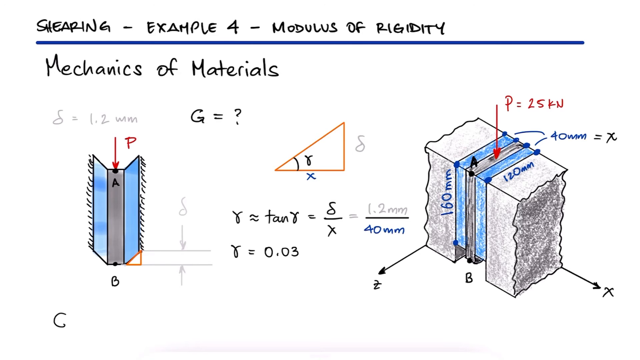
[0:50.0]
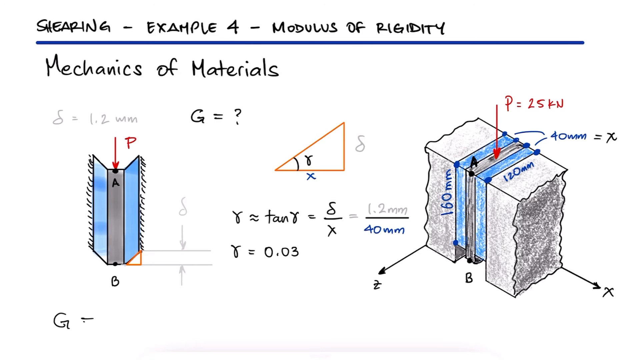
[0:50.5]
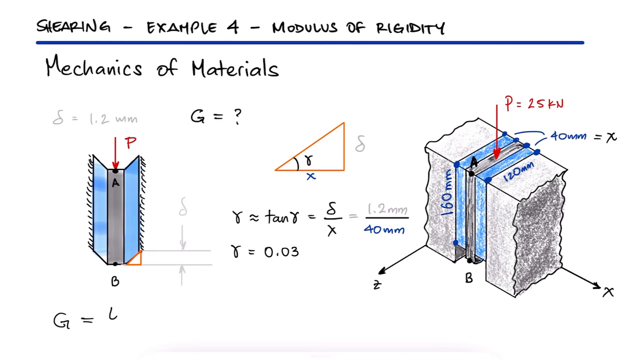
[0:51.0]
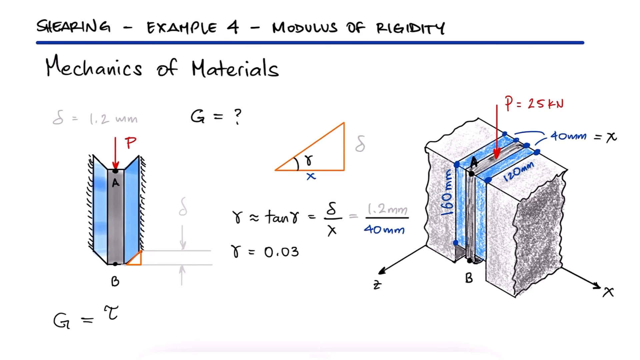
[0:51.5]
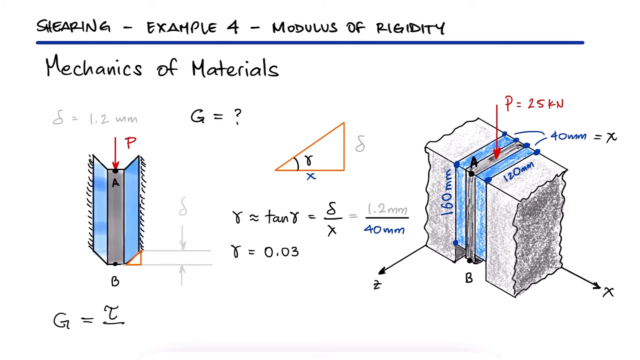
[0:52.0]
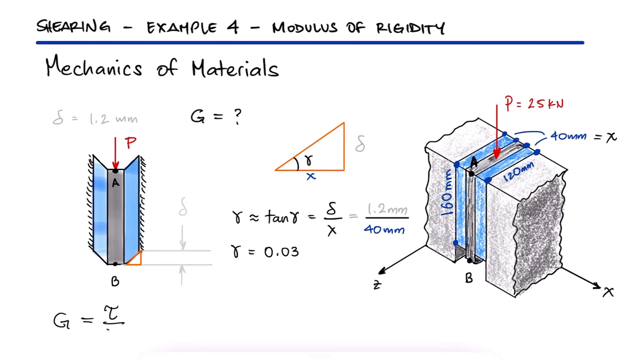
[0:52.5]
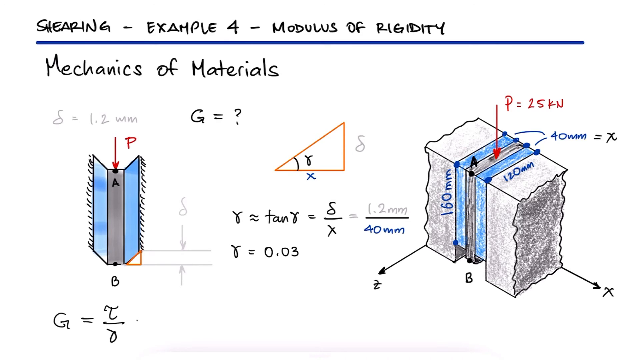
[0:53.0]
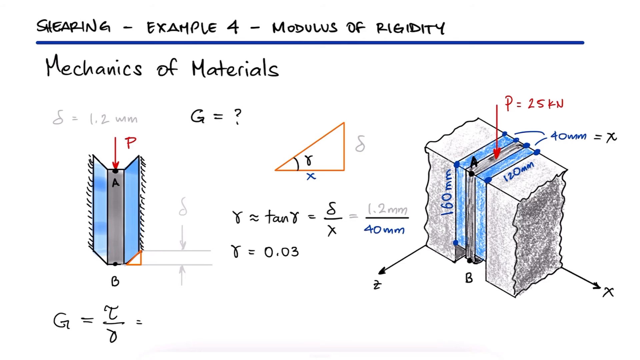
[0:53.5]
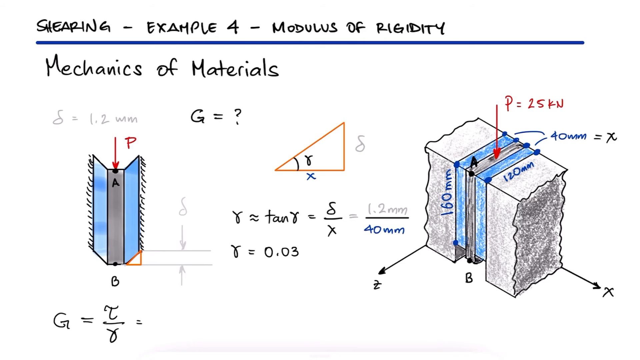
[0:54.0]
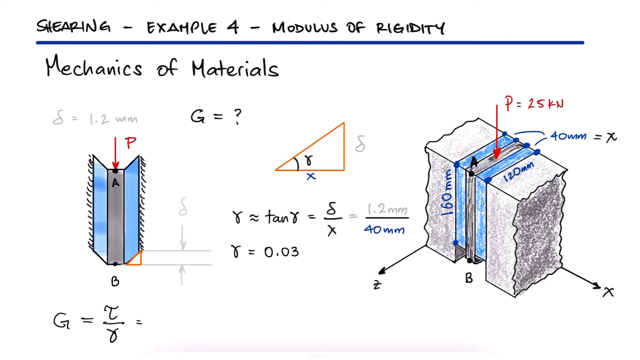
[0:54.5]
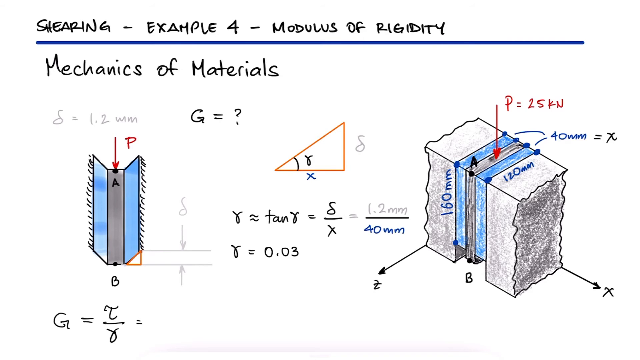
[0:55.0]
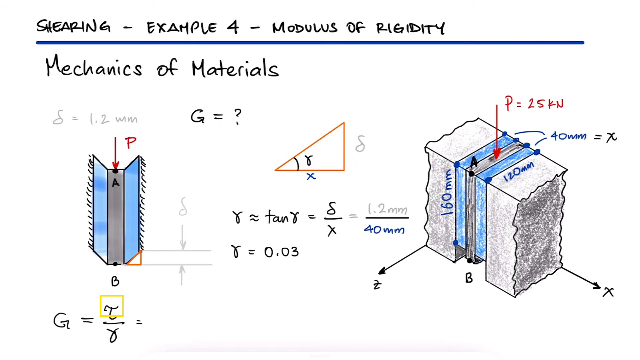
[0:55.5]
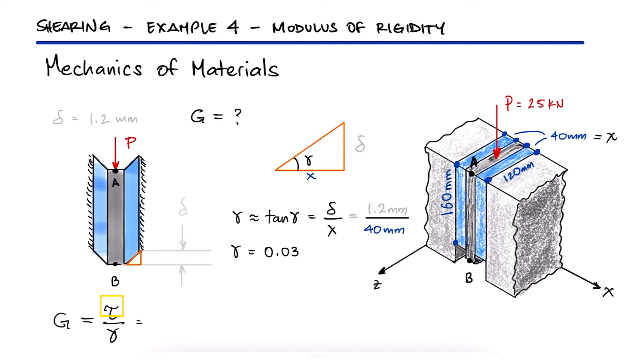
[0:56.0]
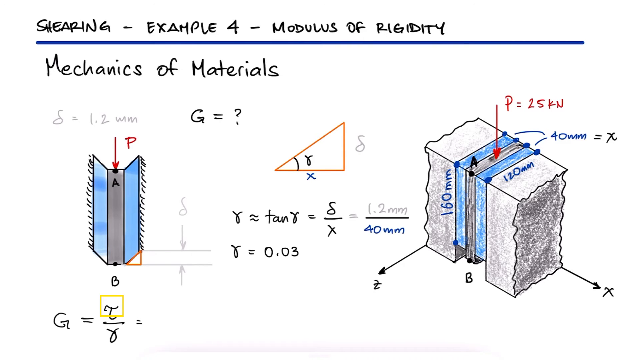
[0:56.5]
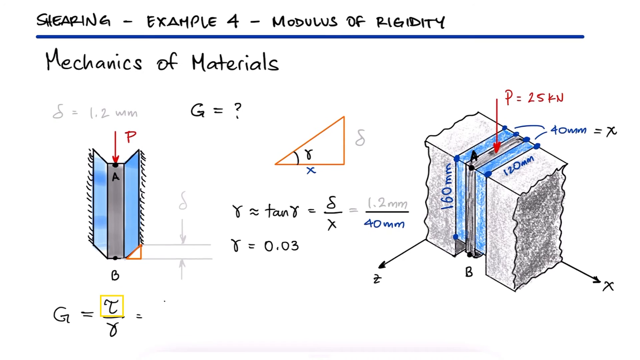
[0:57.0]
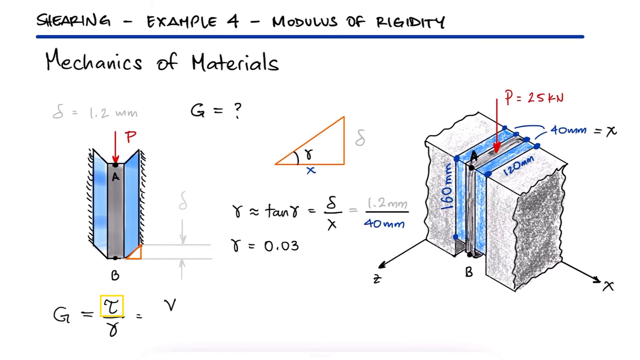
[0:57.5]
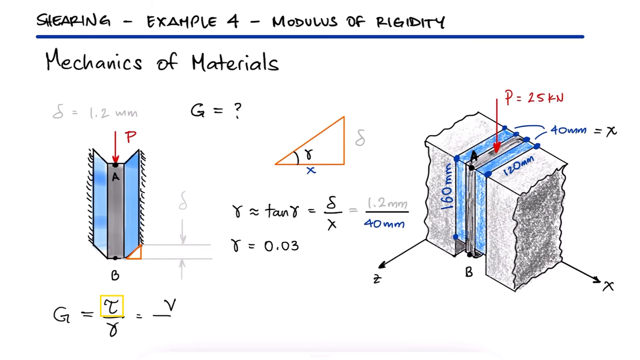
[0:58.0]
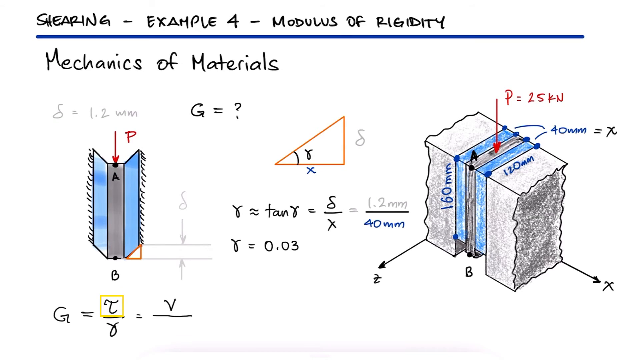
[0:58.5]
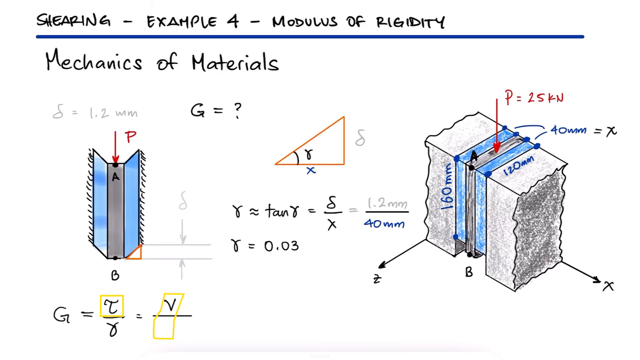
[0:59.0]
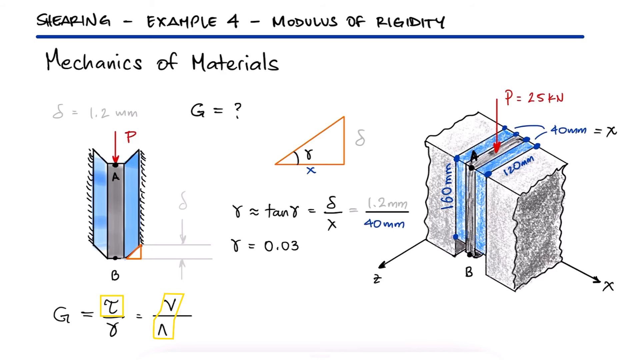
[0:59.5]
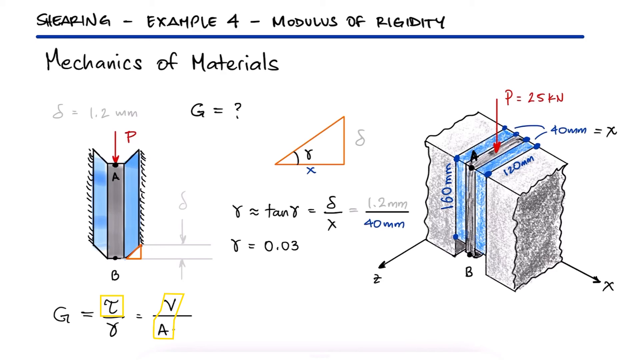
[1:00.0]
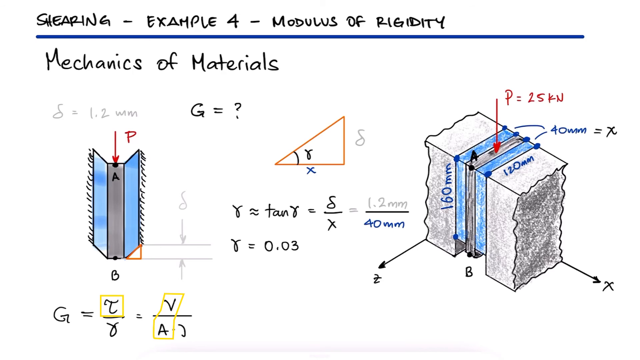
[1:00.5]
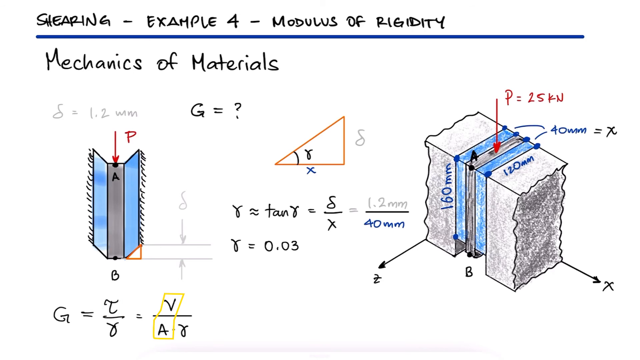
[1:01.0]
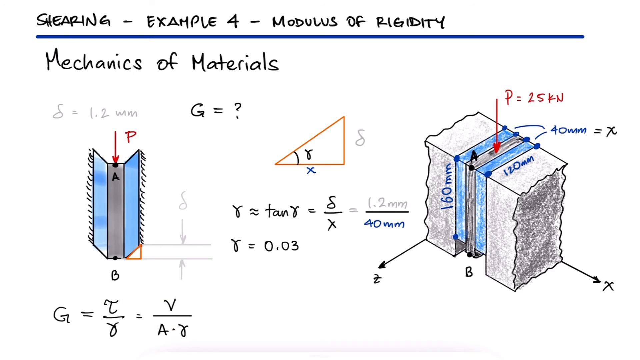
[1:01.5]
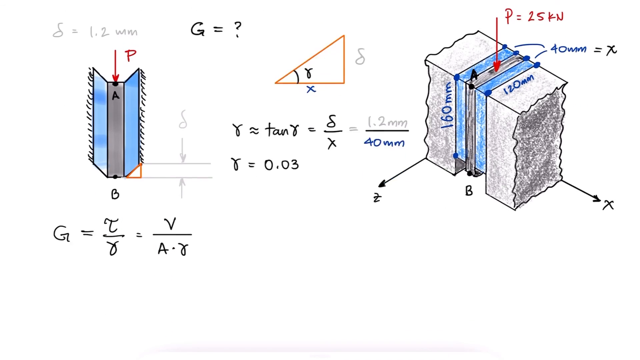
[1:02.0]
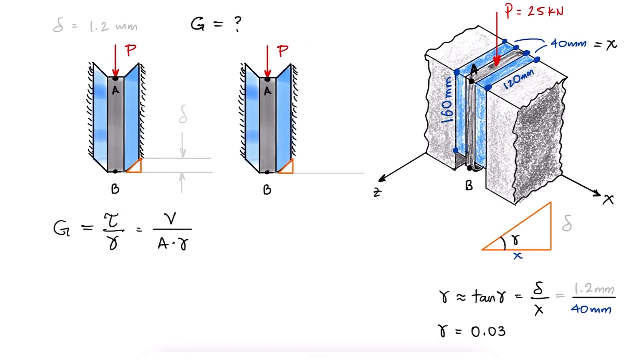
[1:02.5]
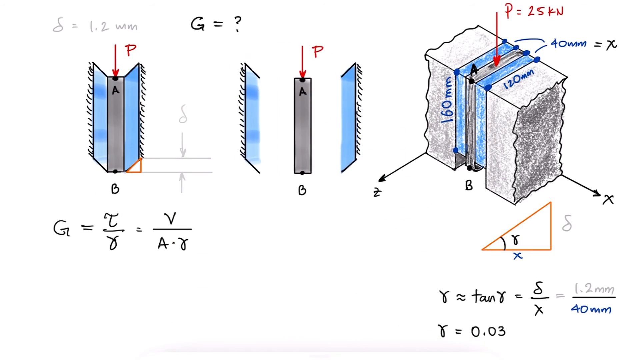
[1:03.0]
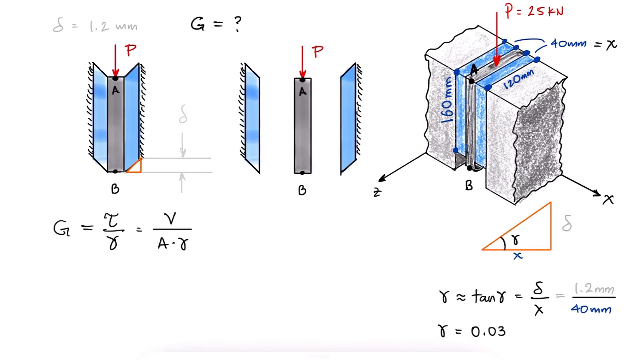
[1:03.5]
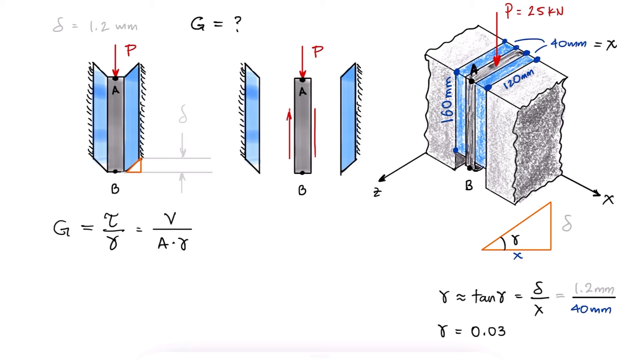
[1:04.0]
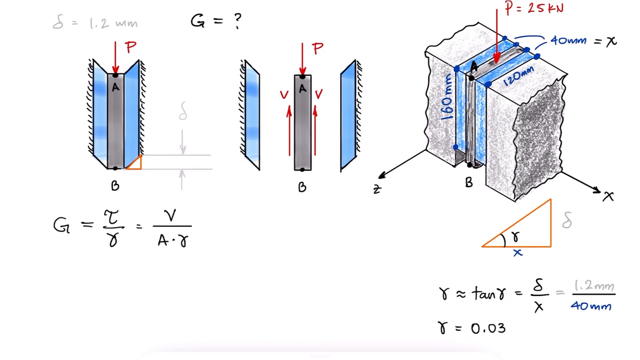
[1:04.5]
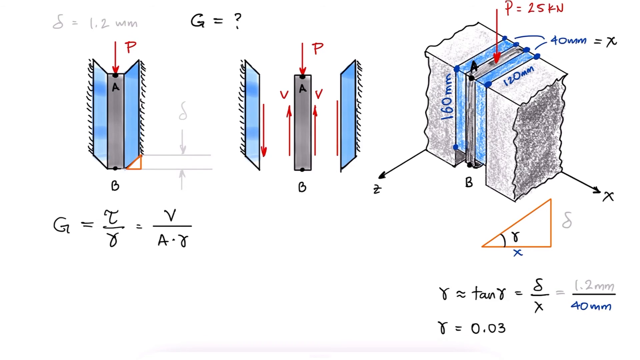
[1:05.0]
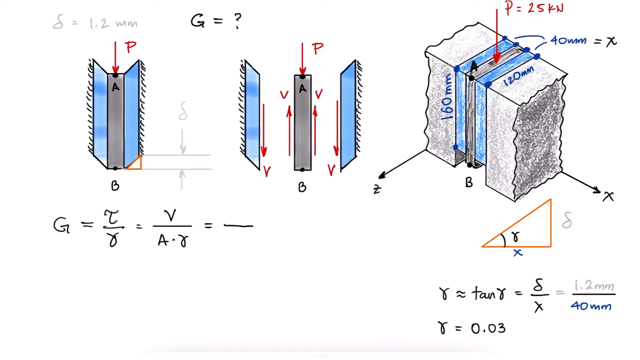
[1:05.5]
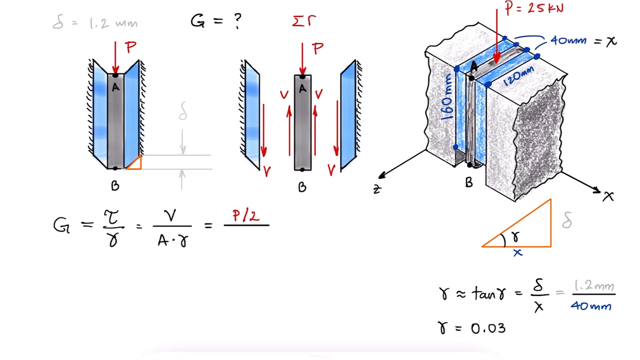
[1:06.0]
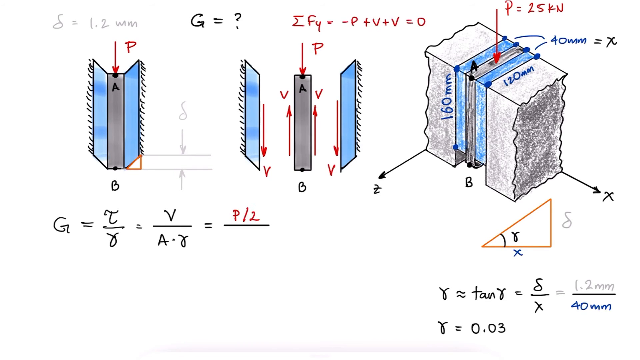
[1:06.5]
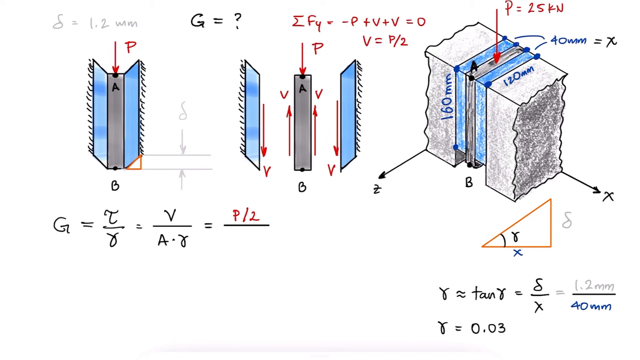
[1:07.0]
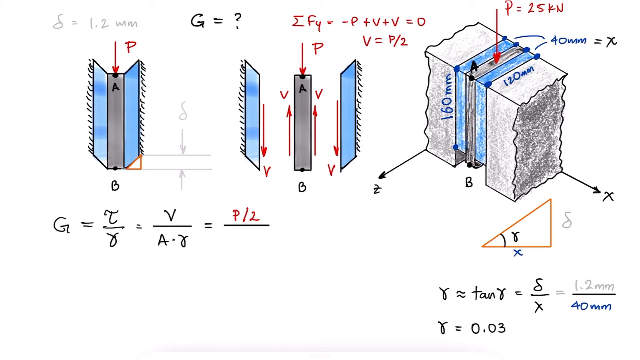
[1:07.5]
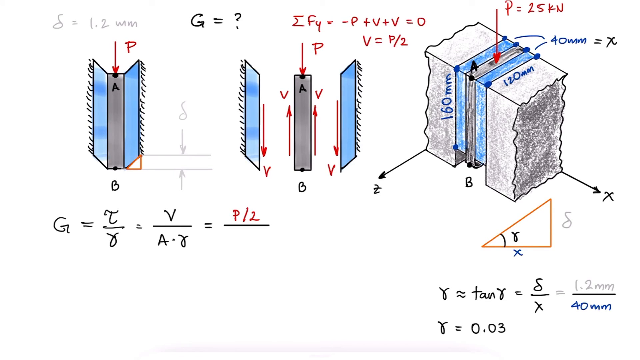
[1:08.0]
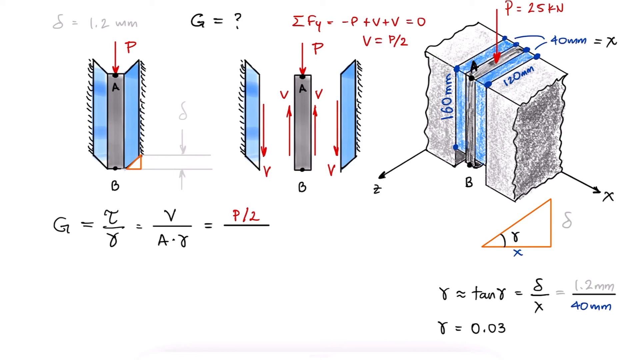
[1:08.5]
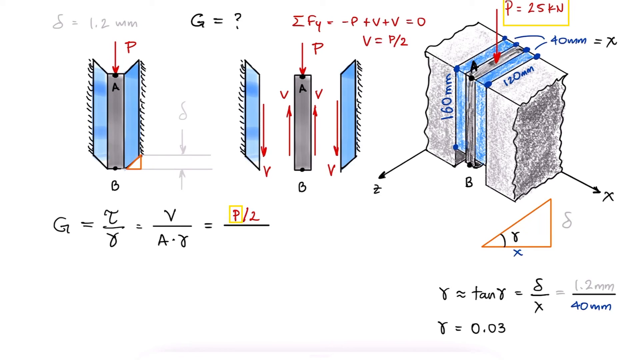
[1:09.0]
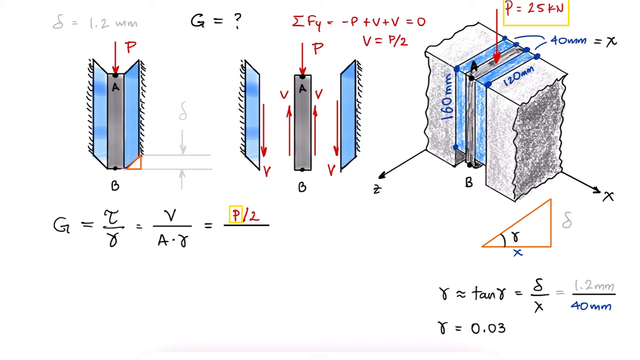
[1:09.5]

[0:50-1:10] The equation appears with the base sketches and the formula below, where the solution for the symbol, 0,03, was found. Below that, in a highlighted yellow box, Q equals T over the symbol, setting up the solving for T. Another equation involving V, A and the symbol follows. The sketch is then divided into three parts labeled A, B and D, with two arrows showing points B and A going up and the other two points going down. Above, an equation appears: minus P plus V plus V equals 0, giving V equals P over 2, and P over 2 is then set equal to the symbol as the solution is written out.